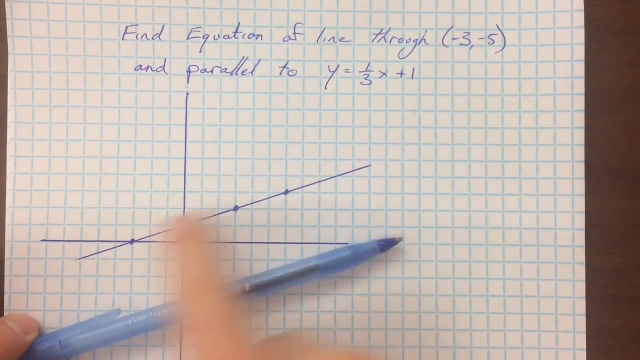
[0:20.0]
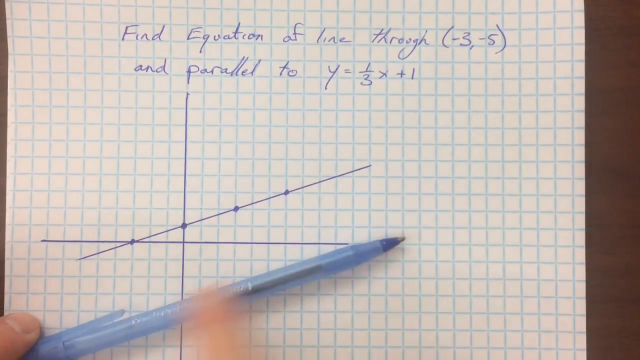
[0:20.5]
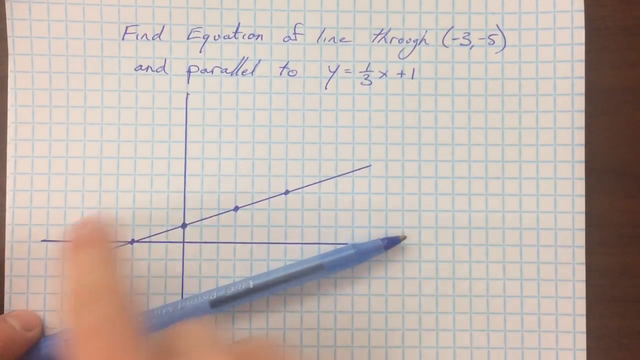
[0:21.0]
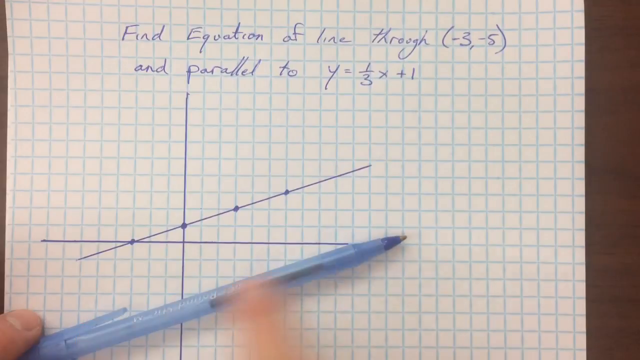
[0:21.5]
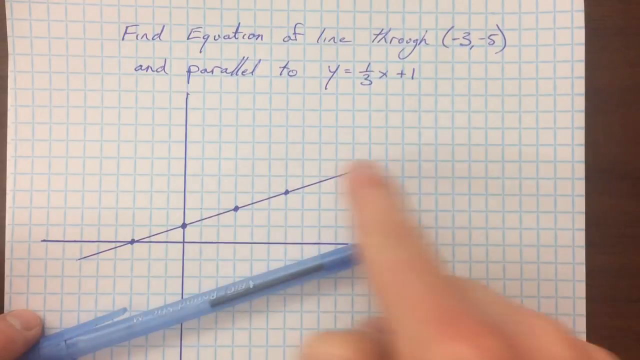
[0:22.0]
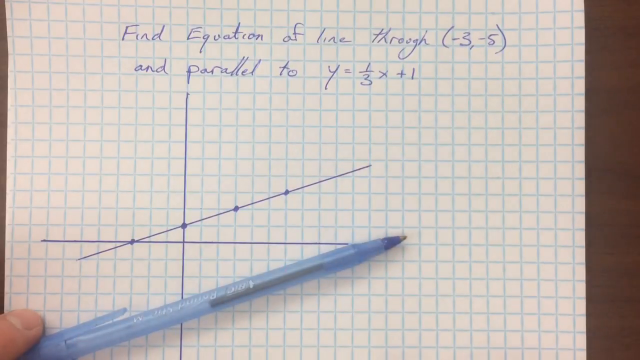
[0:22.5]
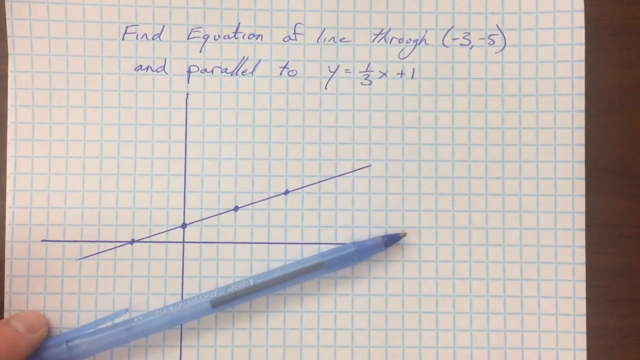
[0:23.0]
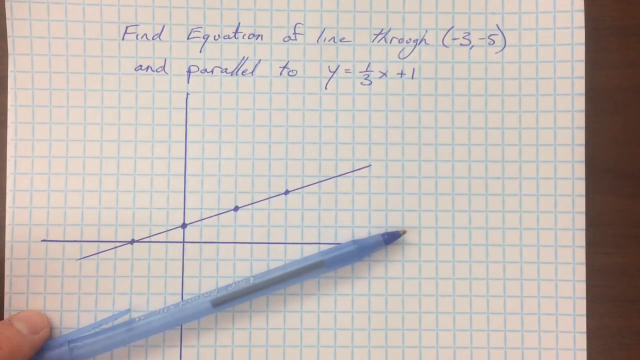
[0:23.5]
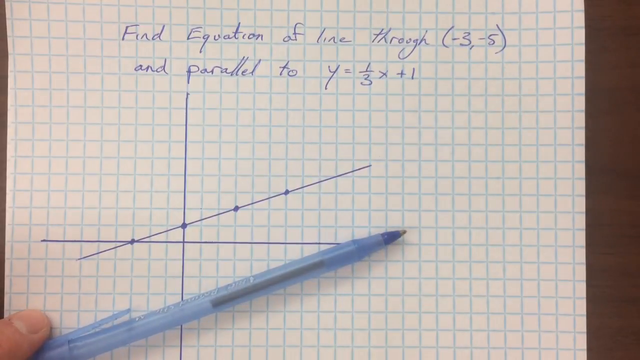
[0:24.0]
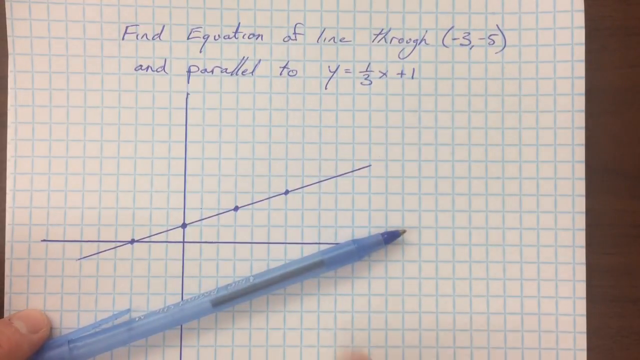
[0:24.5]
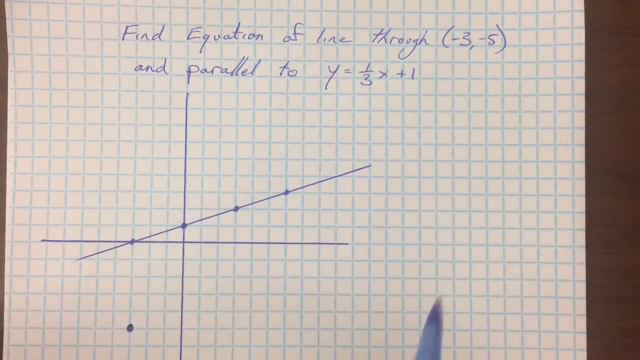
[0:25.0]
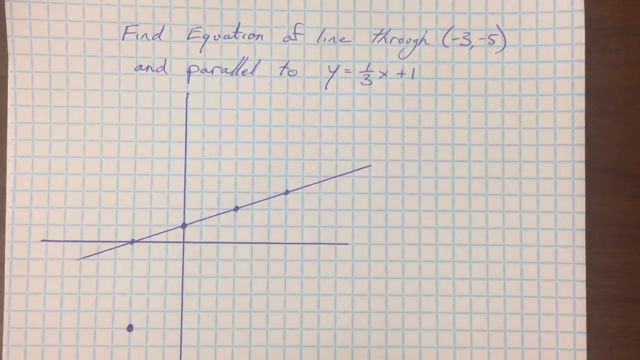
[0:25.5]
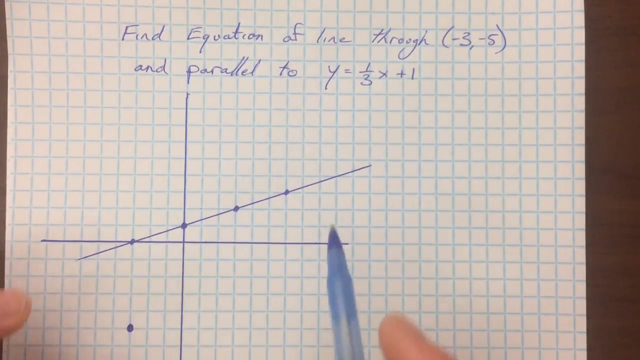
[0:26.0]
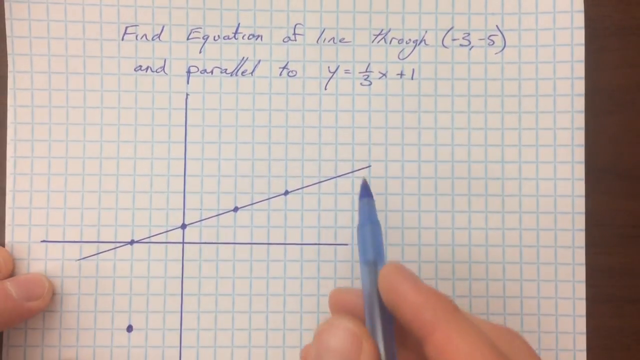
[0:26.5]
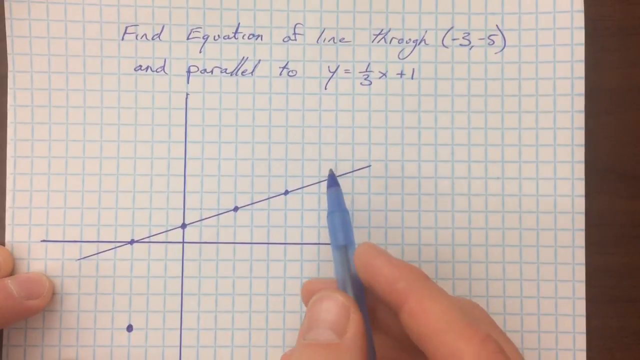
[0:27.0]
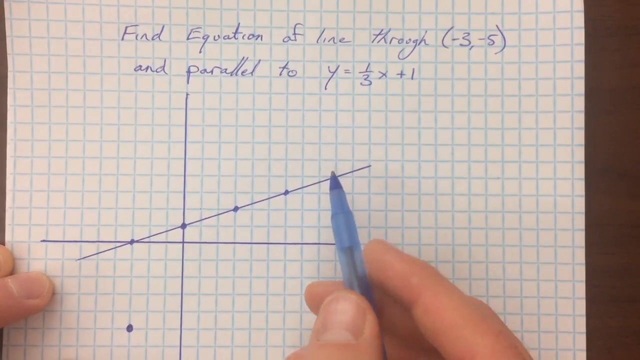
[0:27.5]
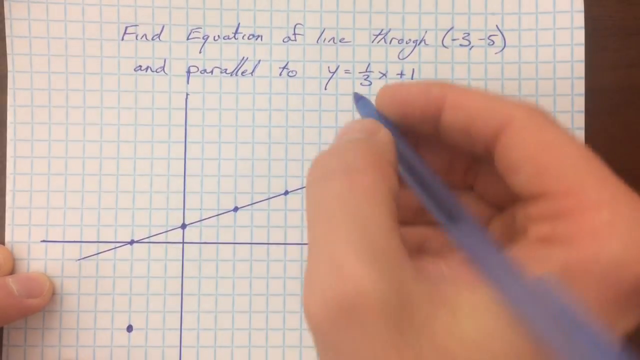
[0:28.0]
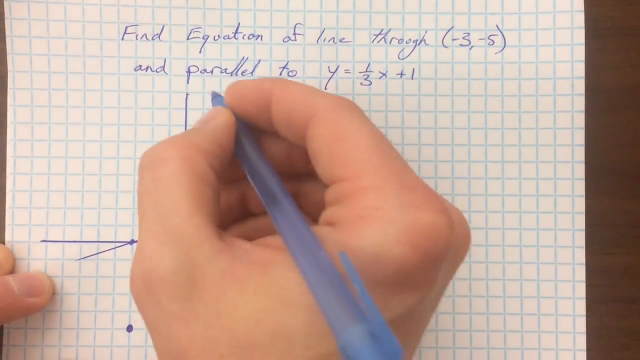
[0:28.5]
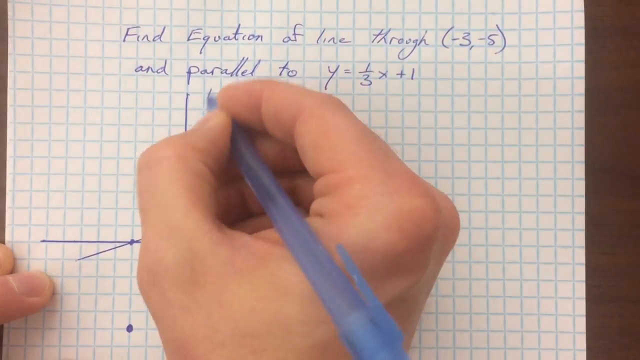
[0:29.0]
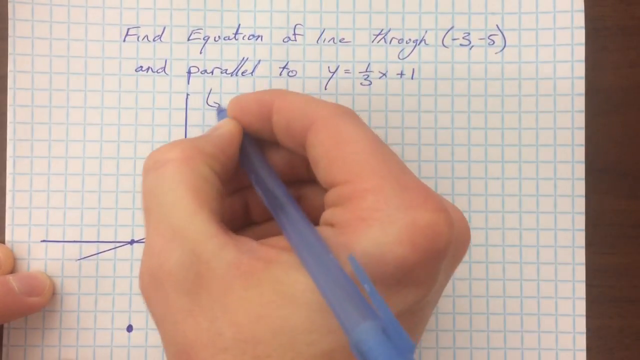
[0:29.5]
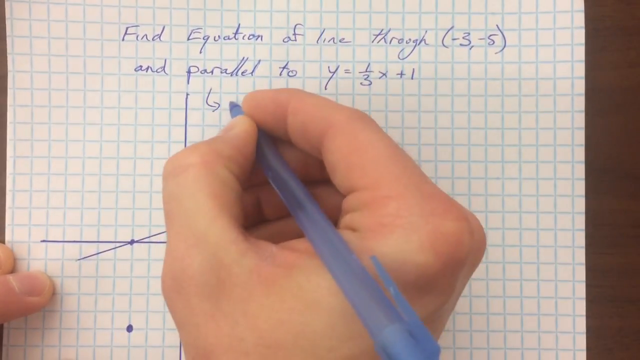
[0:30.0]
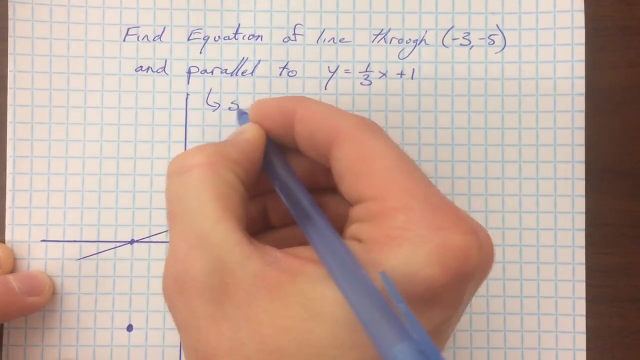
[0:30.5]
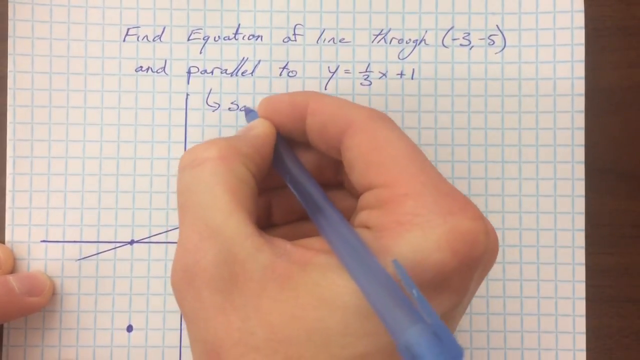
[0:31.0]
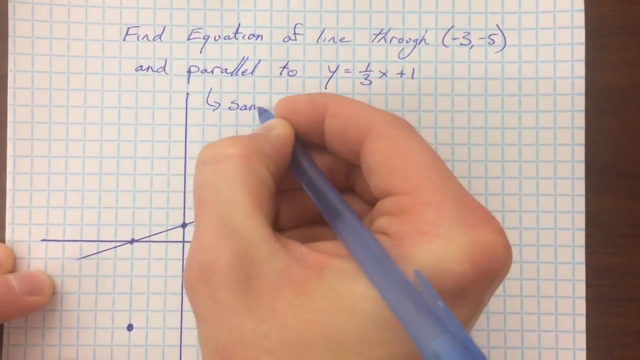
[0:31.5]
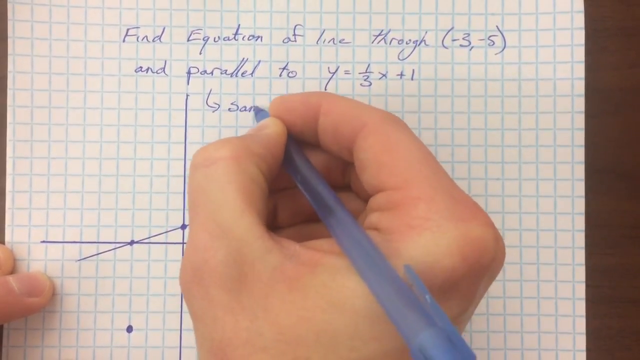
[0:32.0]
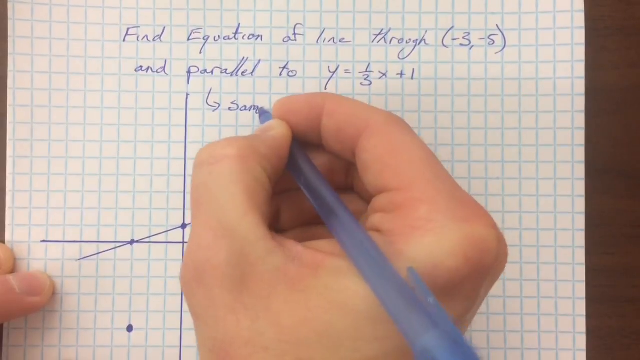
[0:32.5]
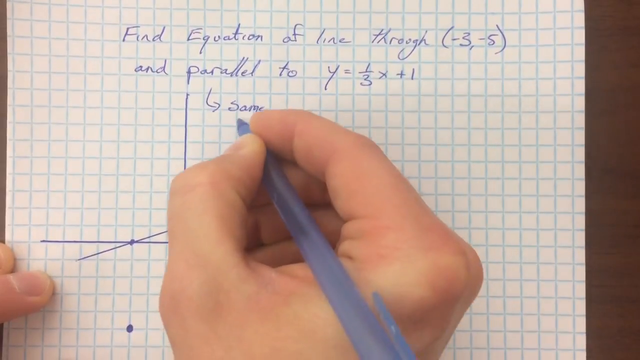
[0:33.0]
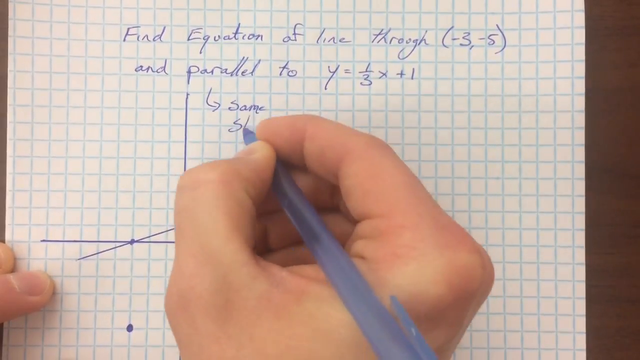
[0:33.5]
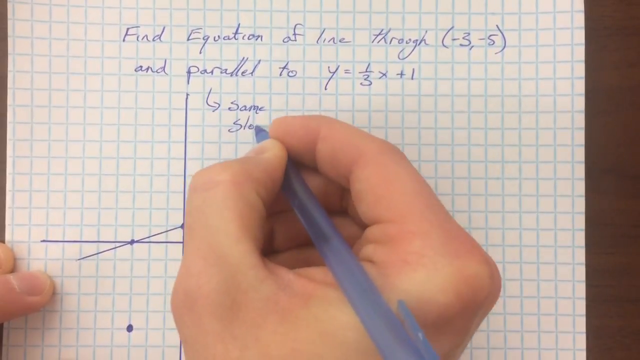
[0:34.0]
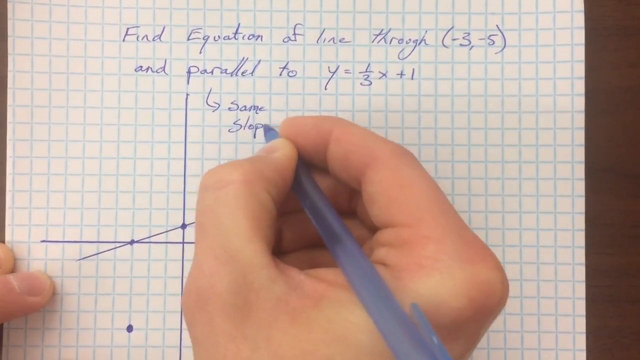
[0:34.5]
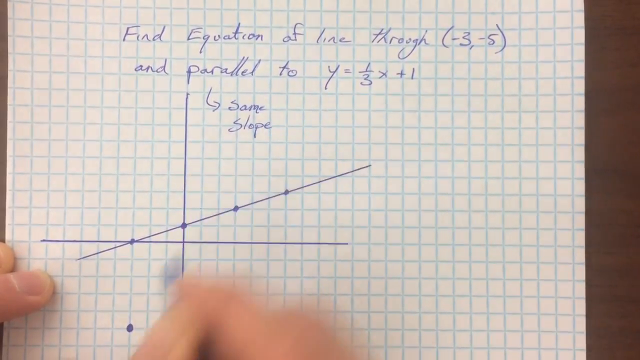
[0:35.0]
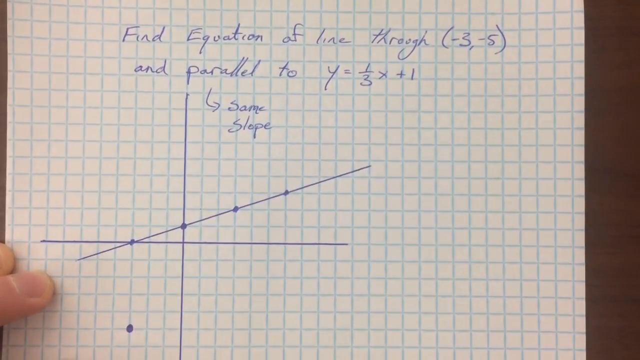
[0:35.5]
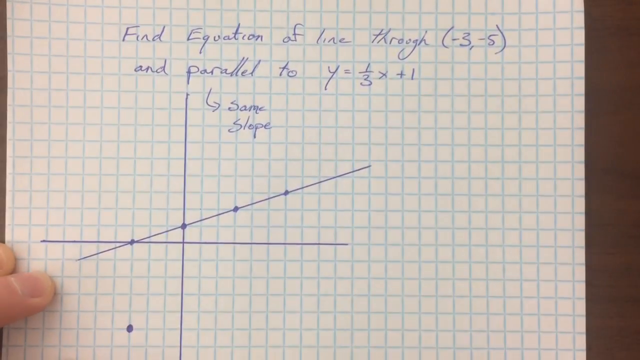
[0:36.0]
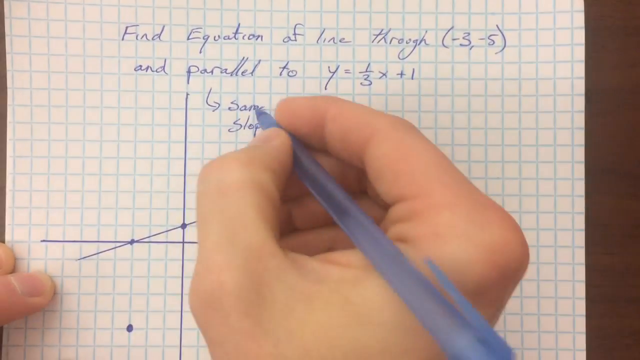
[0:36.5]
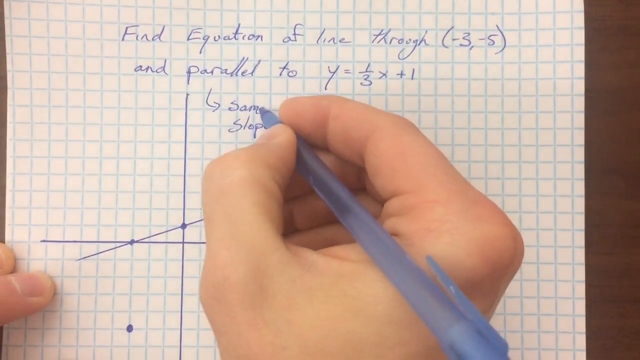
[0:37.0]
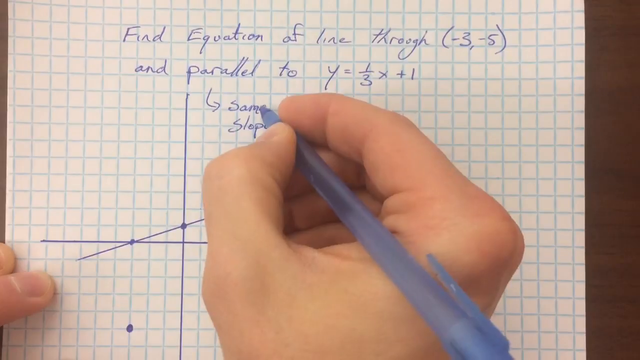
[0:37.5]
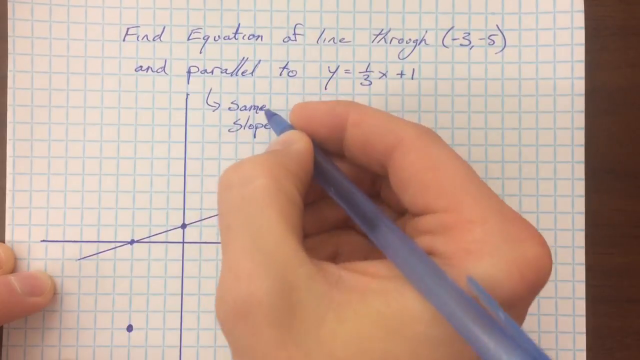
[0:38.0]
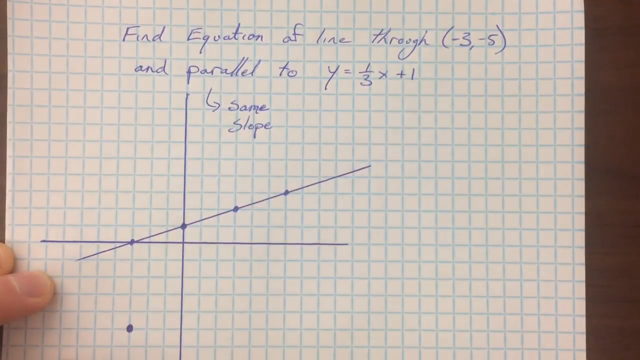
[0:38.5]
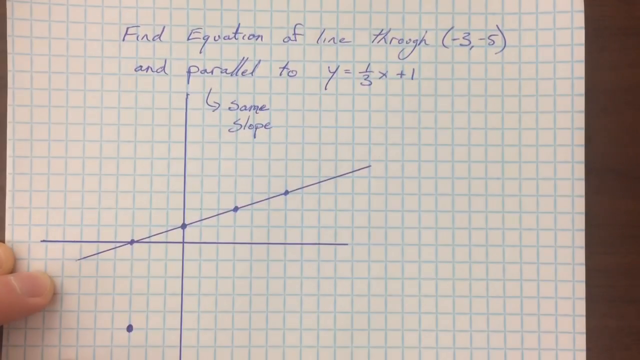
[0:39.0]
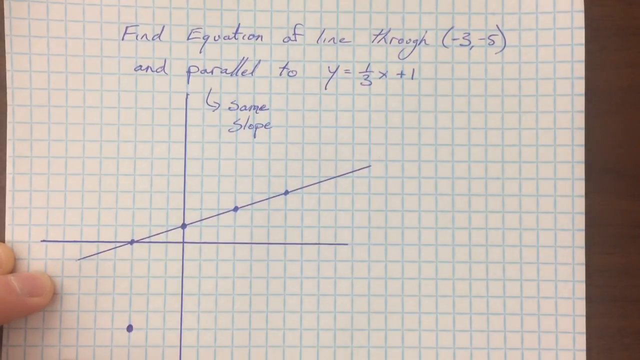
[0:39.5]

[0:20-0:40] The person solving the problem points at the line that has already been drawn and uses the pen to kind of imitate the other line that will be drawn once the problem is solved. Holding the paper with one hand, he writes on it with the other, drawing an arrow from the word "parallel" and writing the words "same slope". The video seems to be a tutorial on how to solve this kind of problem.